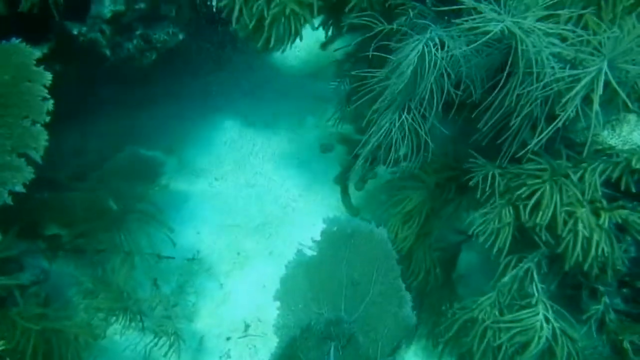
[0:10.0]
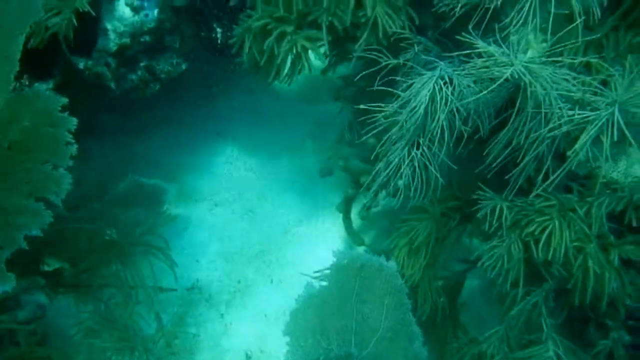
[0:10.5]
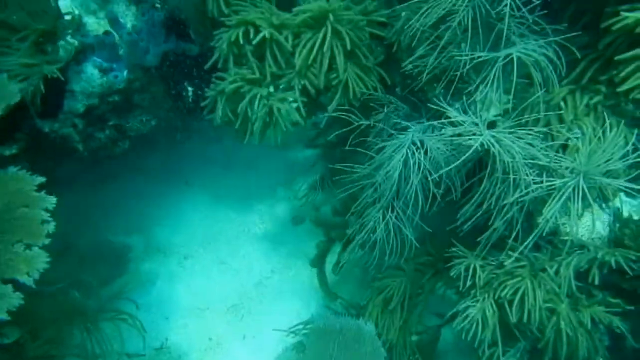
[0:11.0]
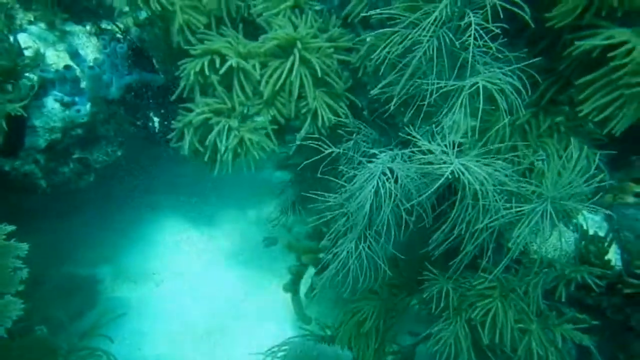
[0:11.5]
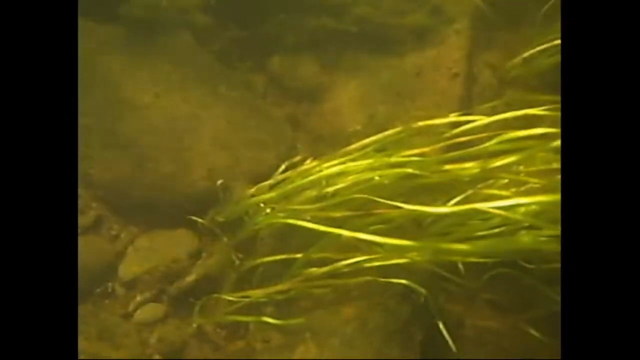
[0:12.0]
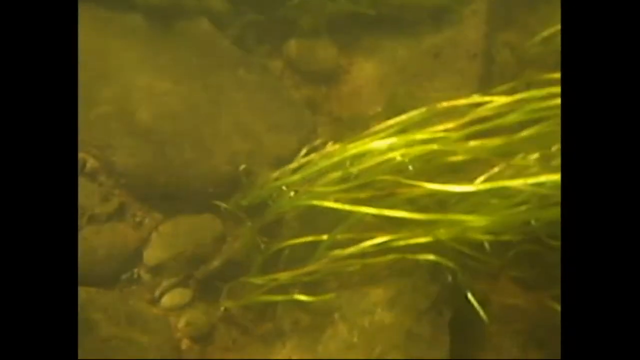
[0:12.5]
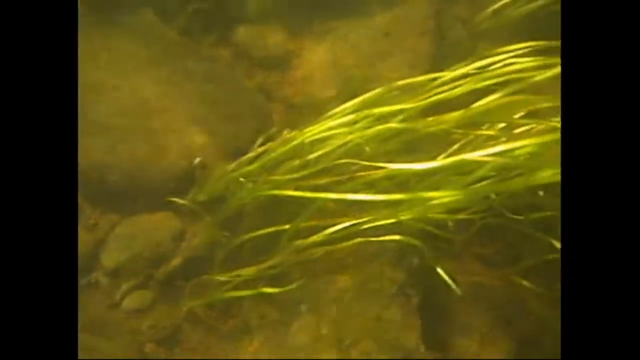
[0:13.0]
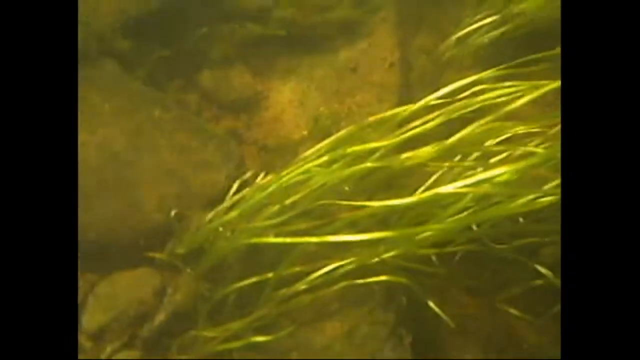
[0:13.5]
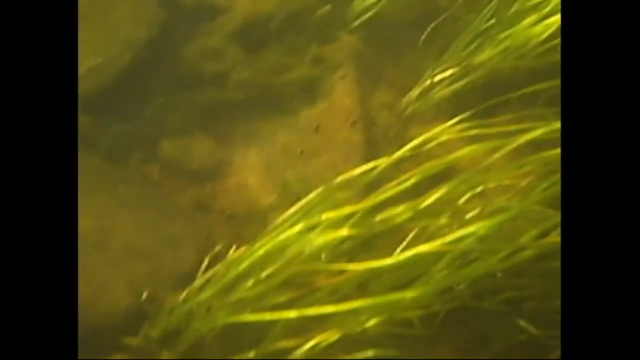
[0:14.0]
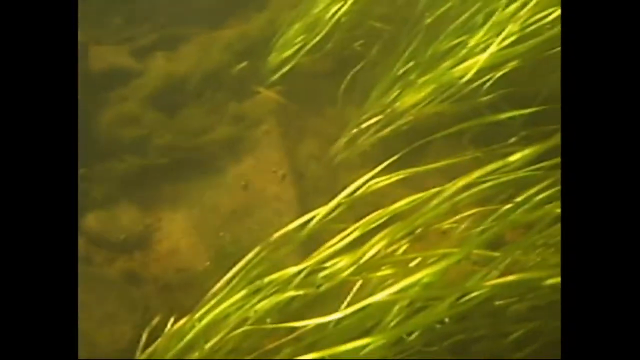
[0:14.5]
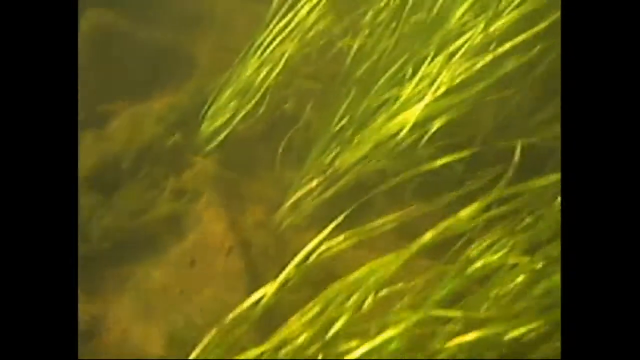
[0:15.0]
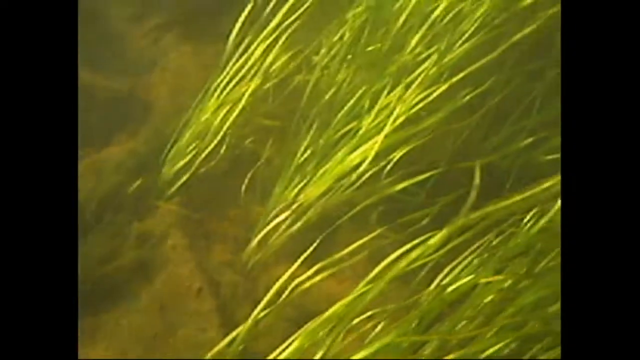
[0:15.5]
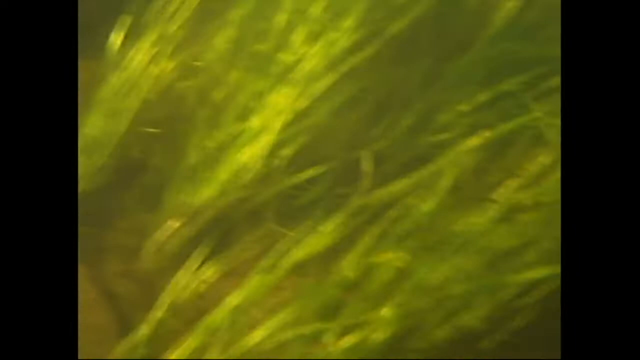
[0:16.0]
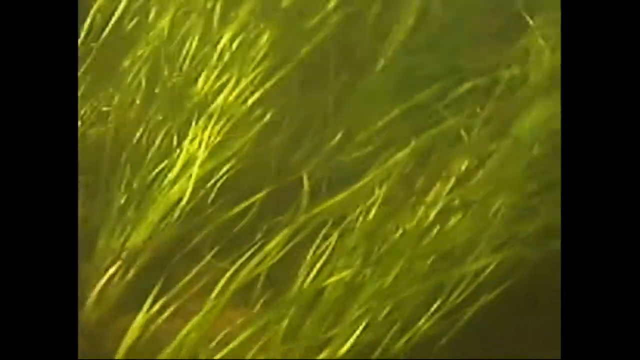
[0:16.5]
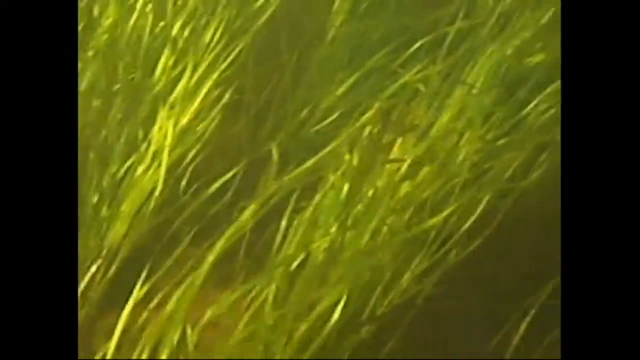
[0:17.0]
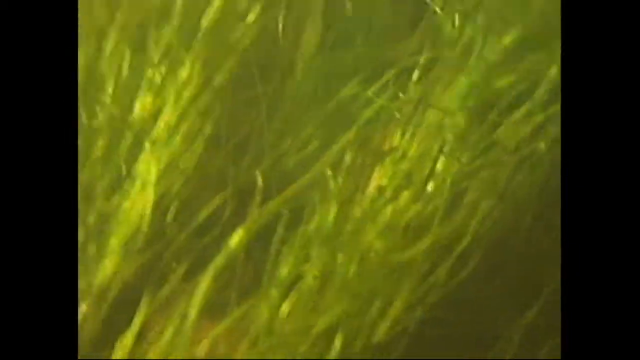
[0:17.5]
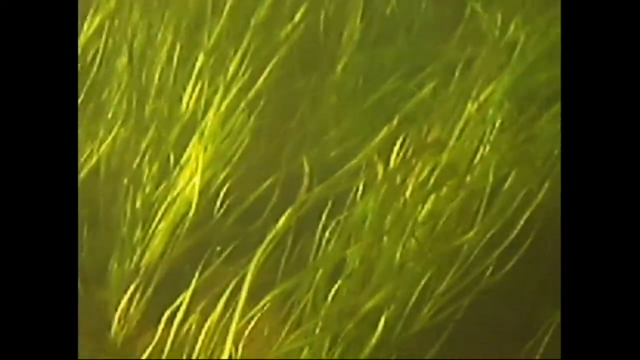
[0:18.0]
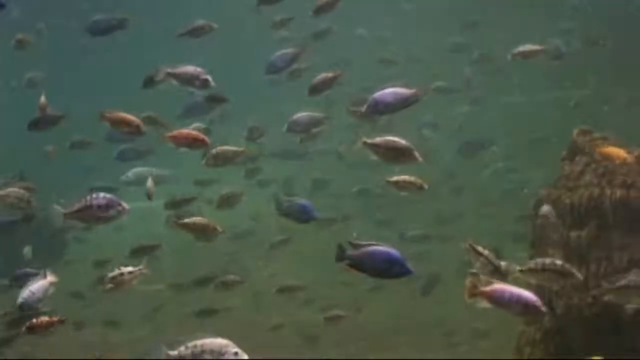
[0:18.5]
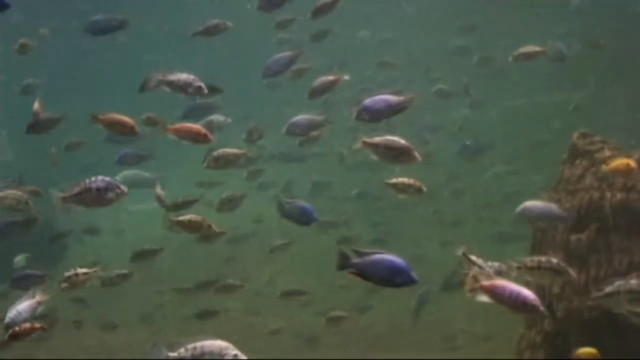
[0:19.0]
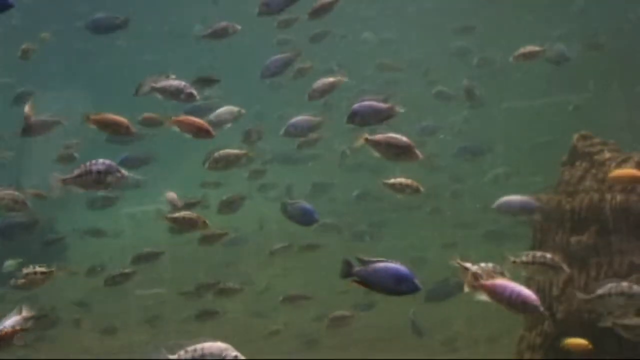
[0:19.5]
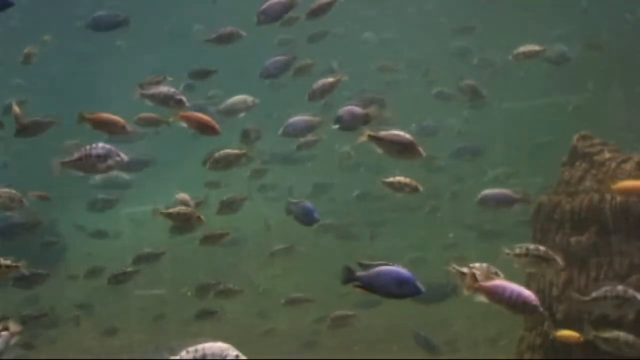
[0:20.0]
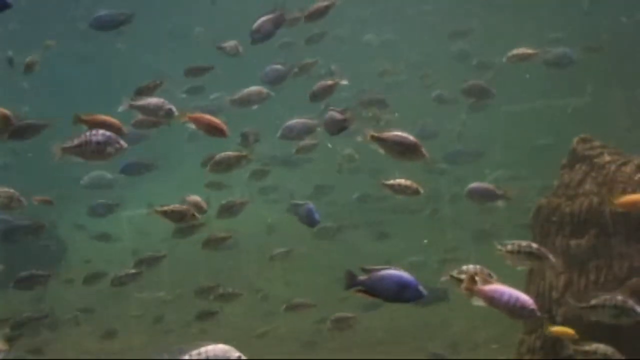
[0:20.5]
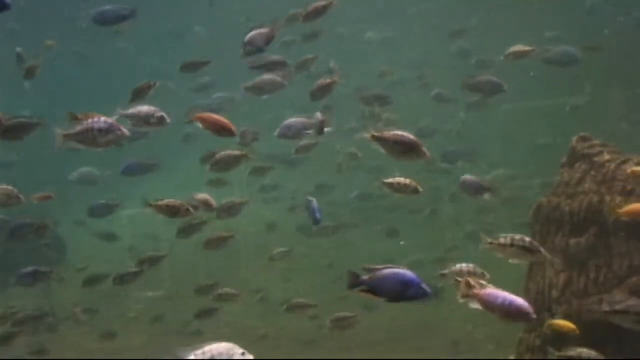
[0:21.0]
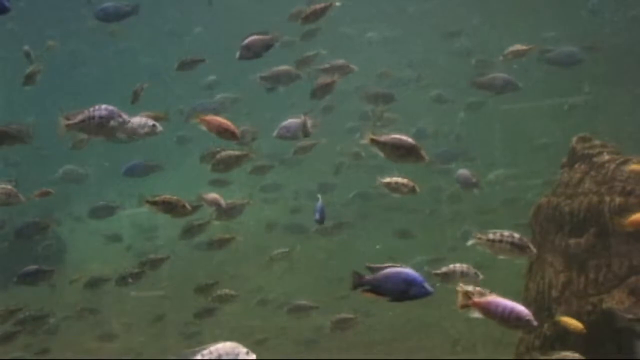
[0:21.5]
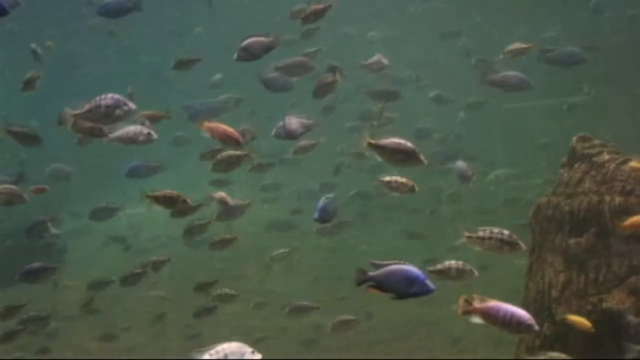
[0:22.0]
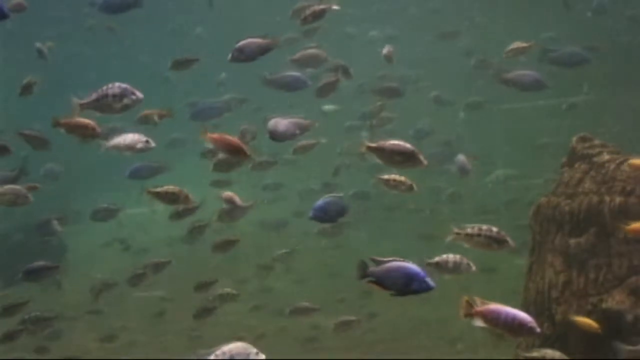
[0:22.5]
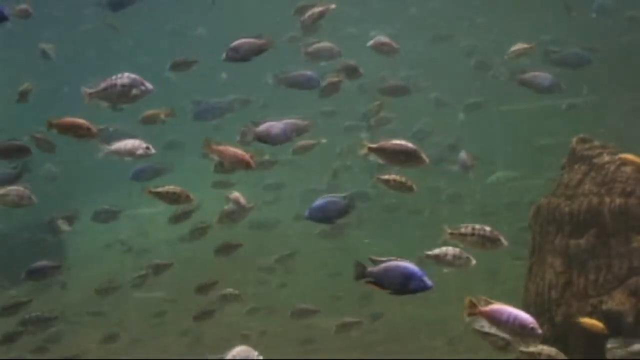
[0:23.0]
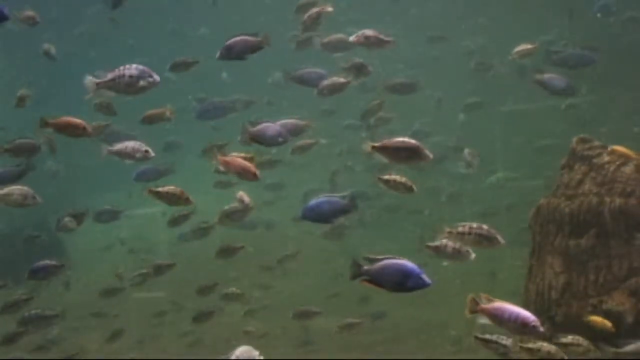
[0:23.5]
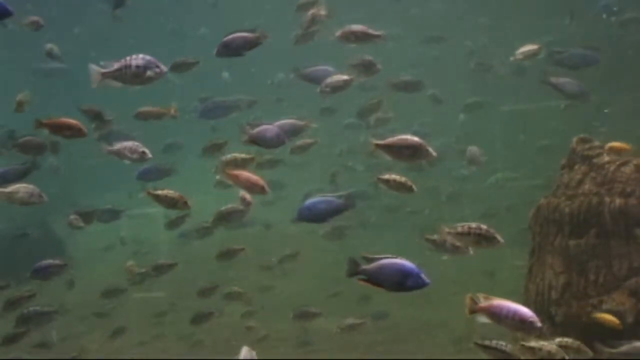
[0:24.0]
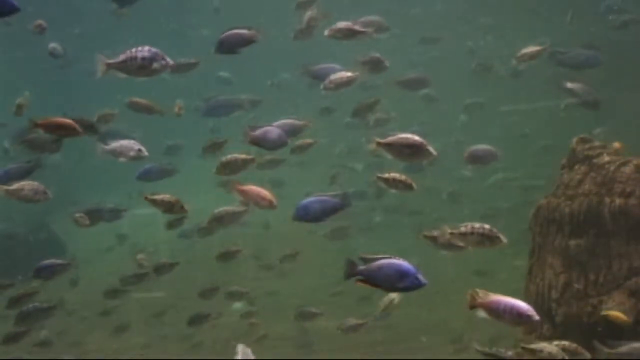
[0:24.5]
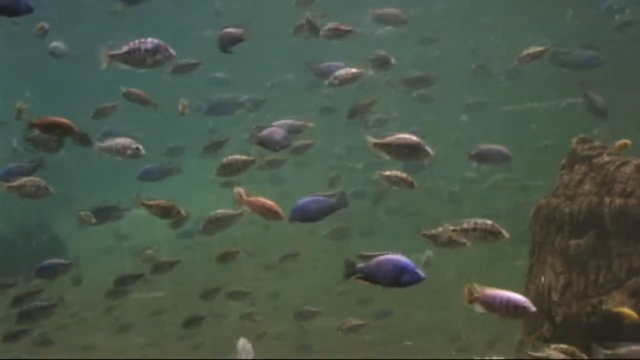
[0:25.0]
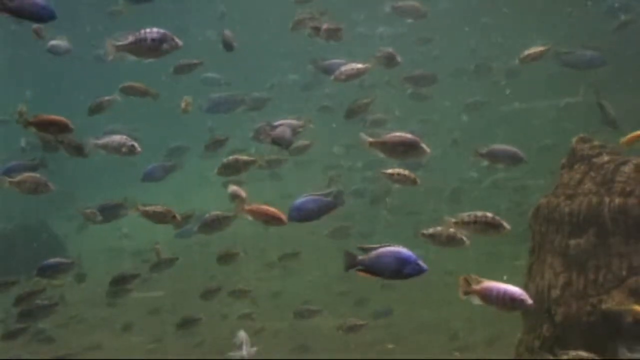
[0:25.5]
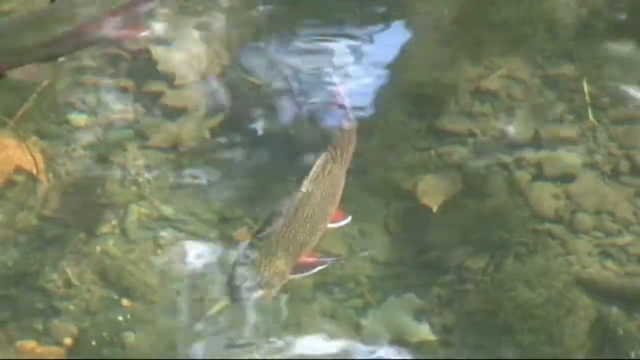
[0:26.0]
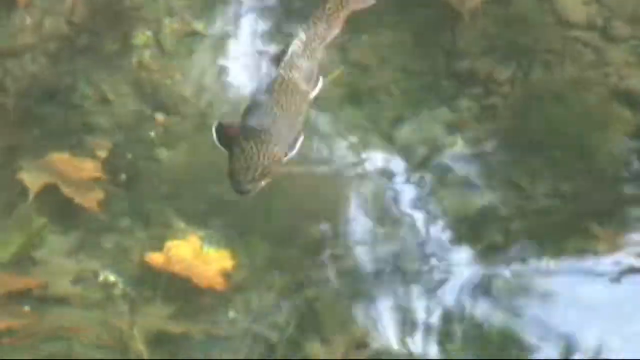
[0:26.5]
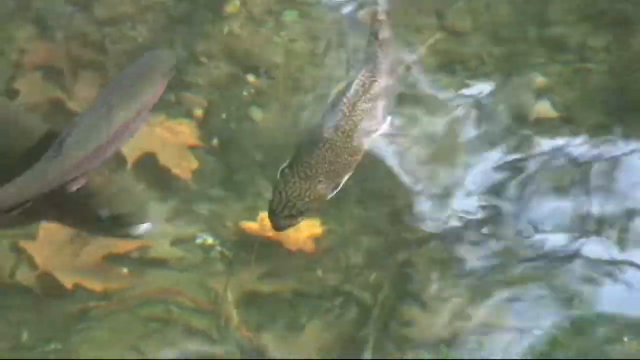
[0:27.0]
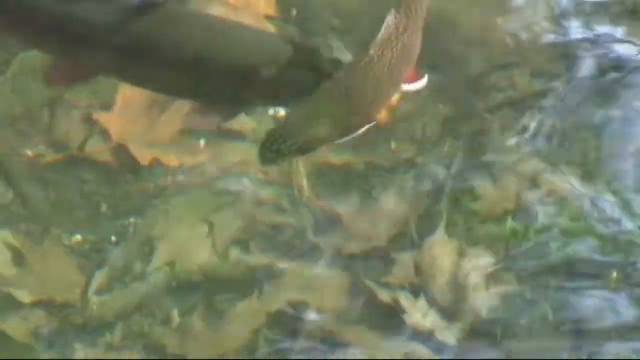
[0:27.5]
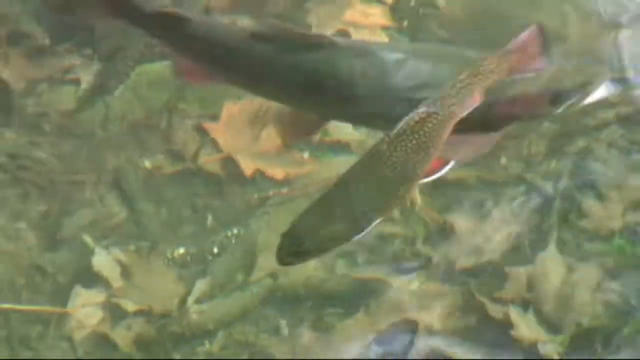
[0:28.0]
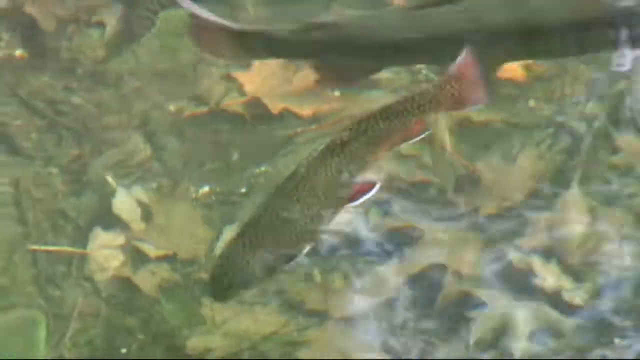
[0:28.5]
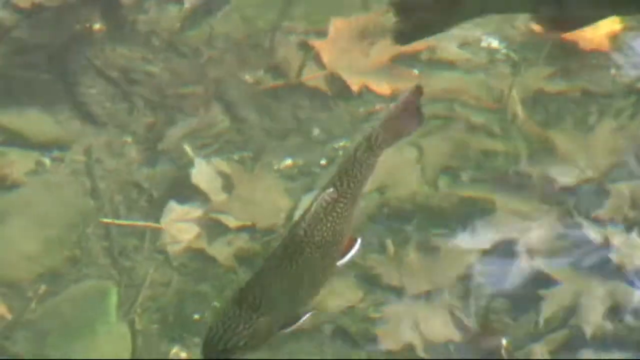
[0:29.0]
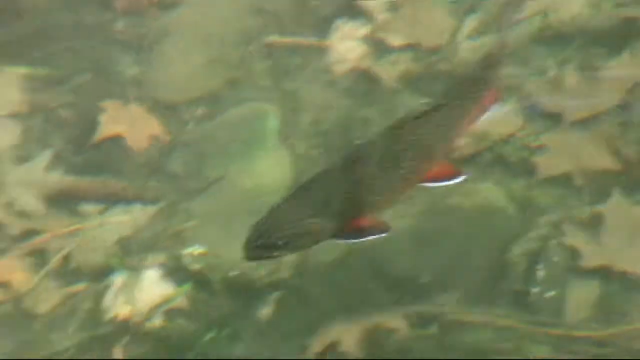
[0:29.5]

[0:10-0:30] An underwater image shows green plants. In the middle of the image there is white sand with sunlight reflecting off it, and the green plants surround the perimeter. From the middle top down the right-hand side there are plants with very thin leaves similar to pine needles; near the bottom of the right-hand side the leaves get a little thicker. On the bottom and left-hand side there are plants with wider, oval-shaped green leaves. The image then changes to a murkier underwater scene with light green plants that look very similar to long onion grass strands, with sunlight reflecting off them. Next, fish swim under the water: dozens of small fish in different colors, blue, orange and beige. Then three fish, two medium-size brown fish and one larger fish, swim in a clearer river or stream, with leaves on the bottom of the waterbed.